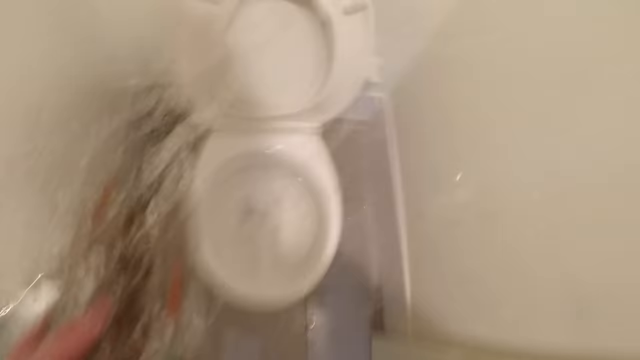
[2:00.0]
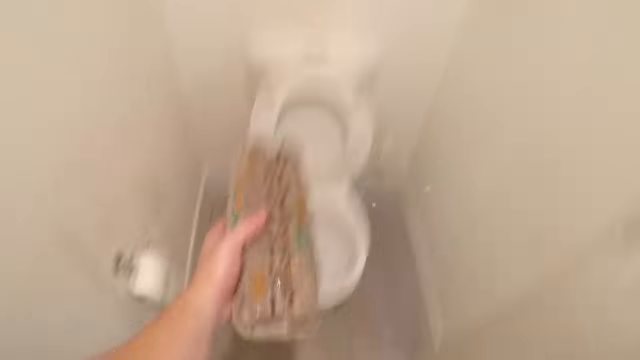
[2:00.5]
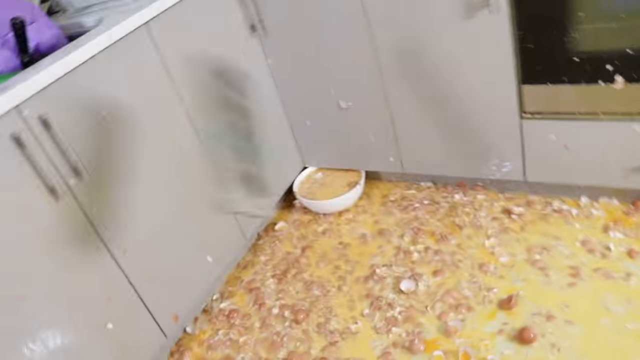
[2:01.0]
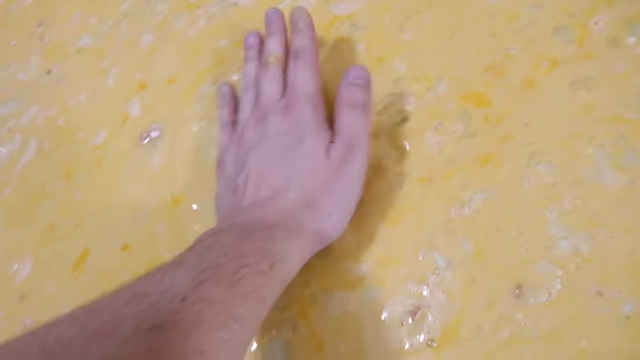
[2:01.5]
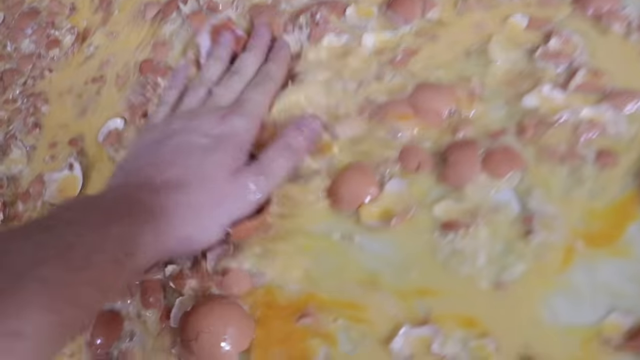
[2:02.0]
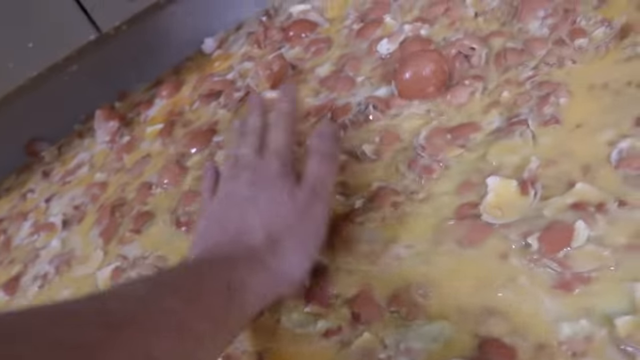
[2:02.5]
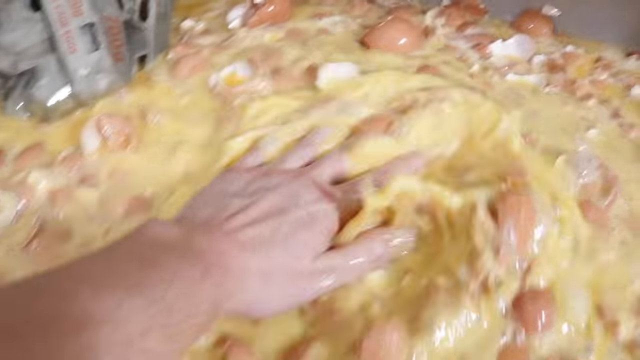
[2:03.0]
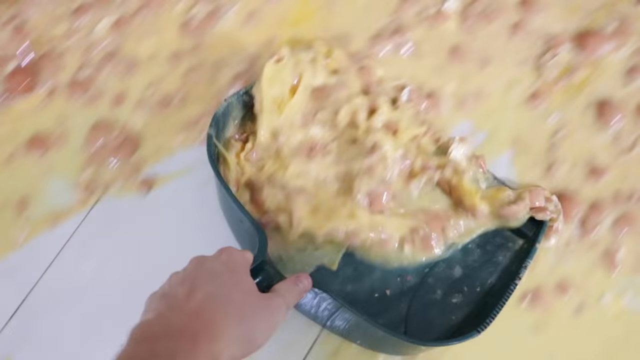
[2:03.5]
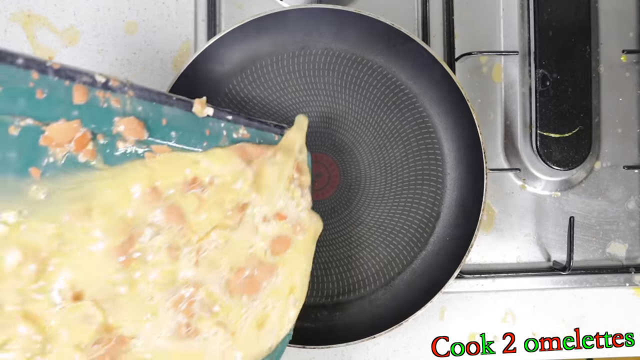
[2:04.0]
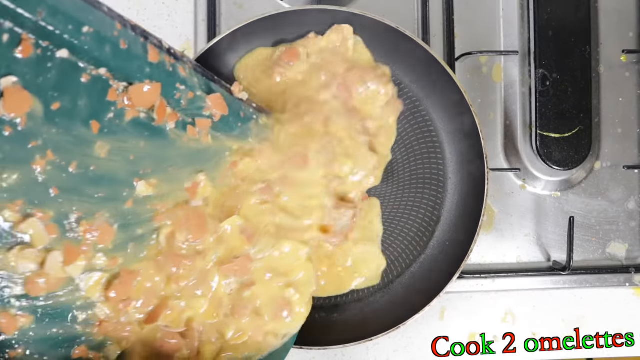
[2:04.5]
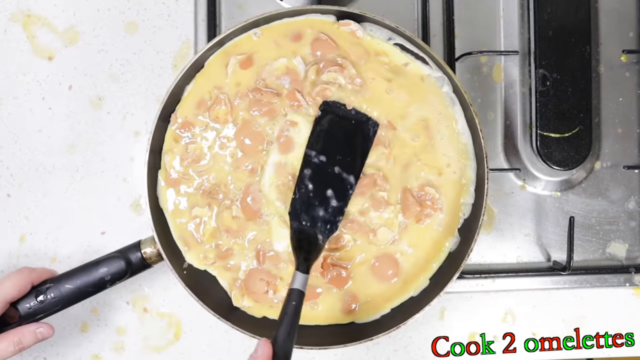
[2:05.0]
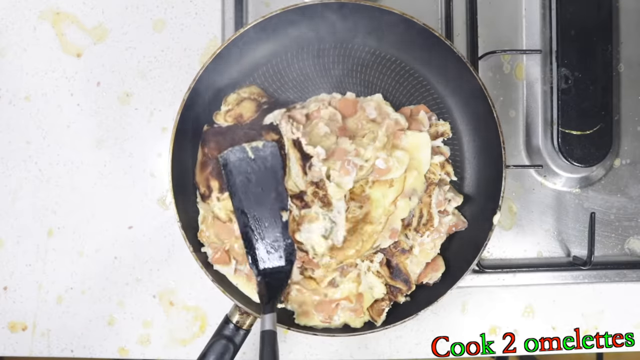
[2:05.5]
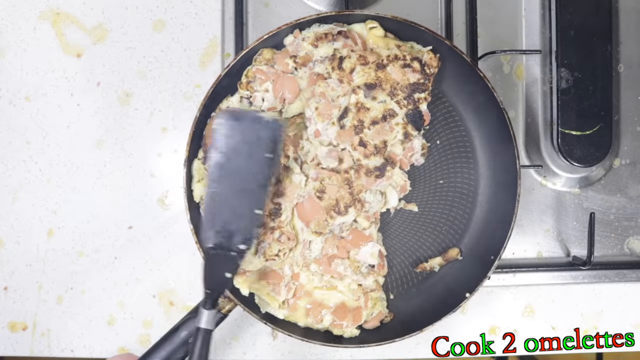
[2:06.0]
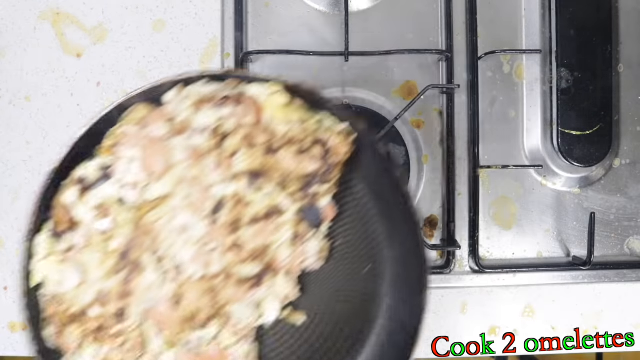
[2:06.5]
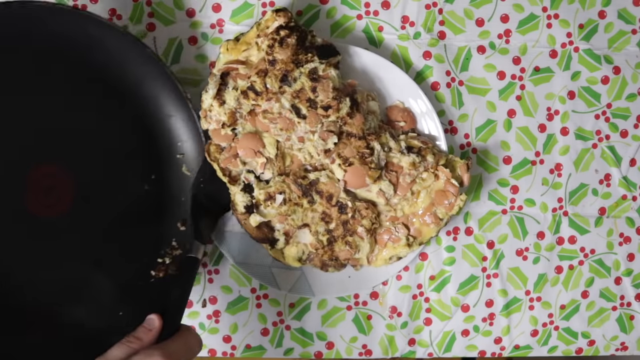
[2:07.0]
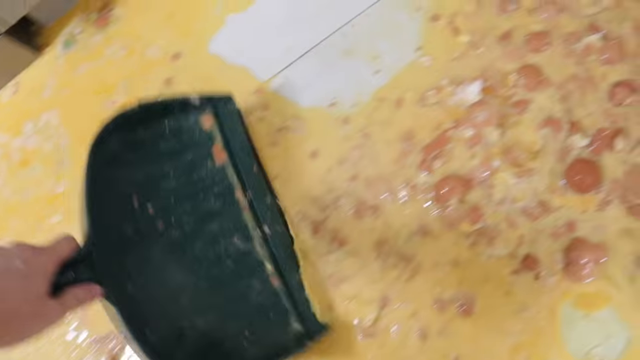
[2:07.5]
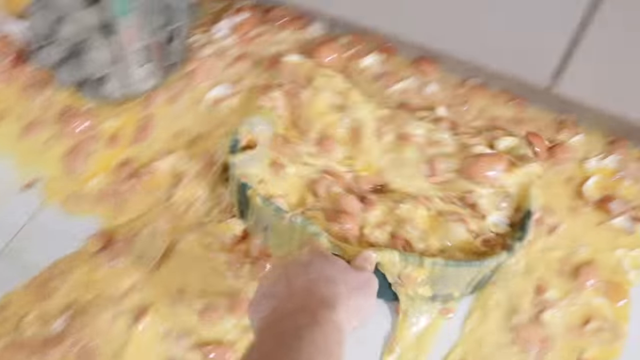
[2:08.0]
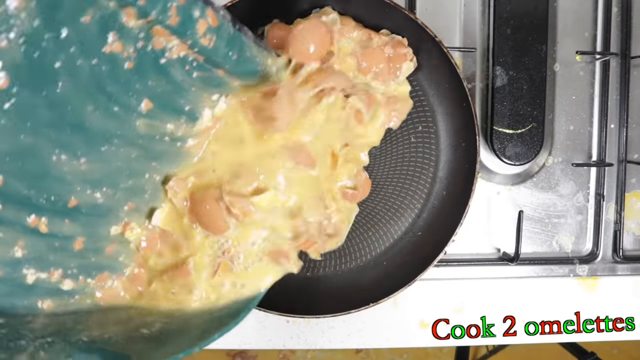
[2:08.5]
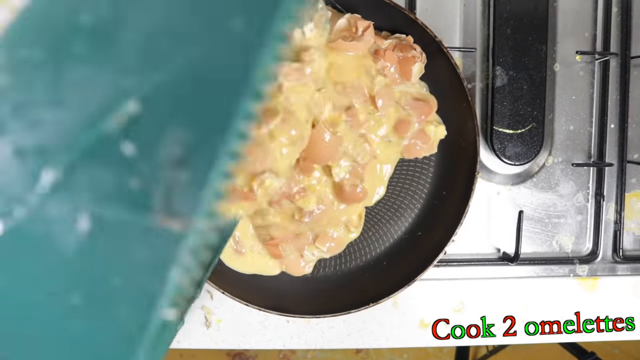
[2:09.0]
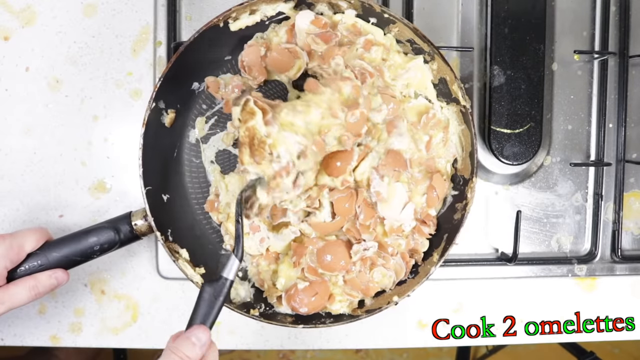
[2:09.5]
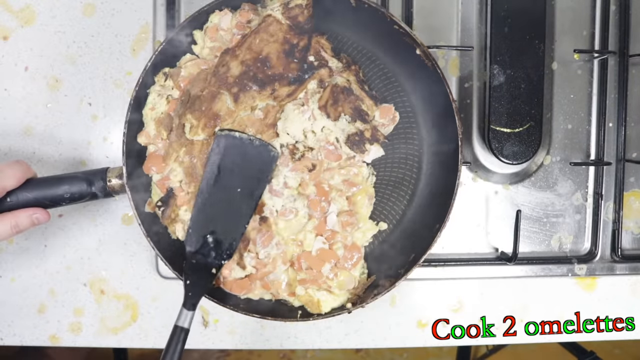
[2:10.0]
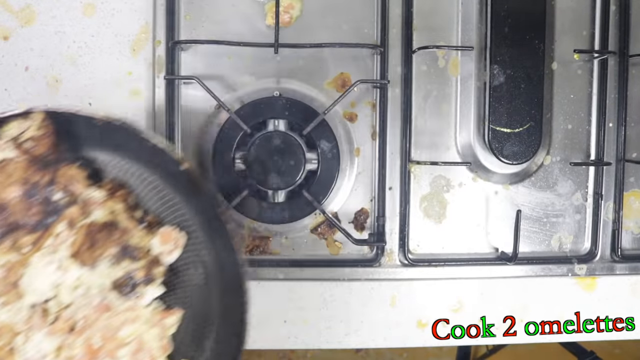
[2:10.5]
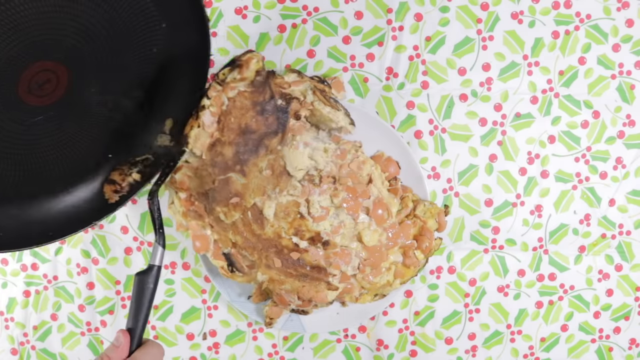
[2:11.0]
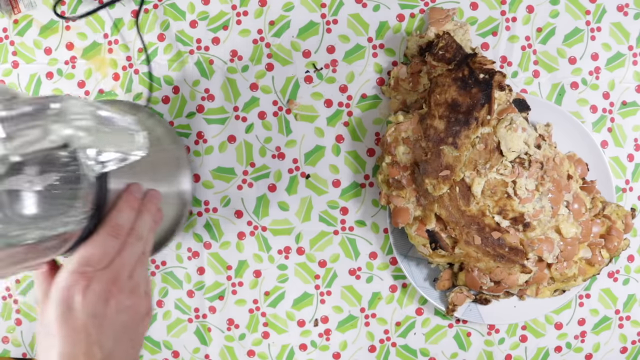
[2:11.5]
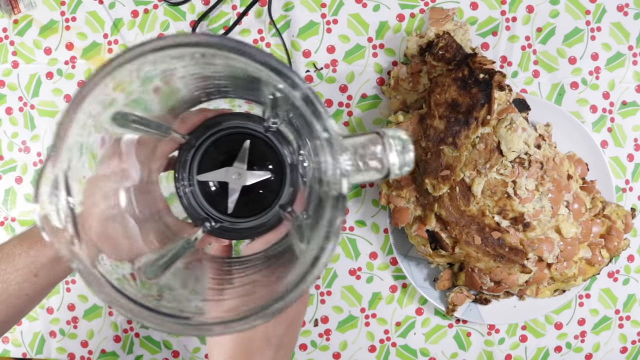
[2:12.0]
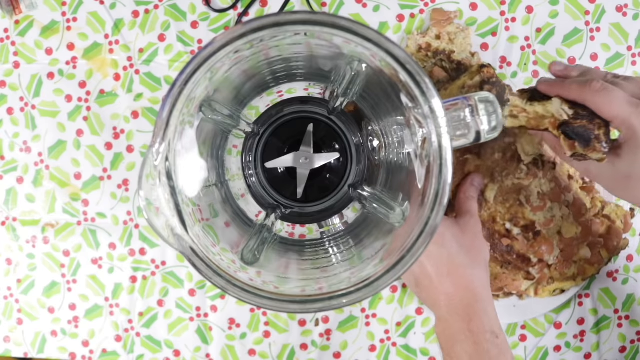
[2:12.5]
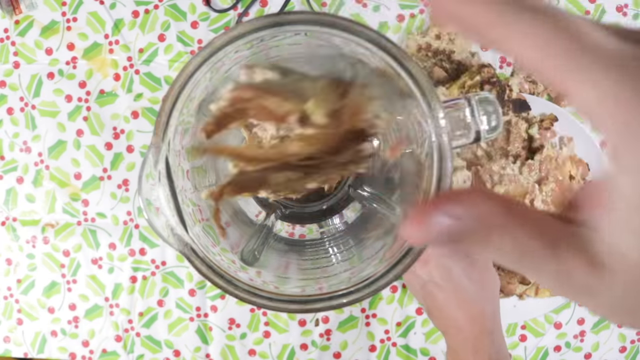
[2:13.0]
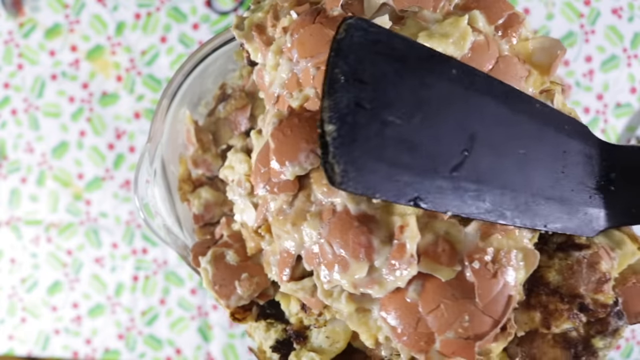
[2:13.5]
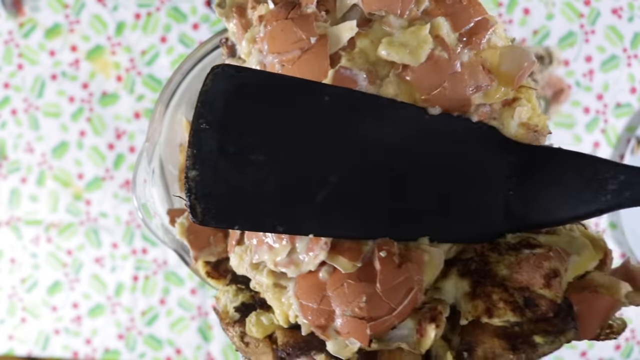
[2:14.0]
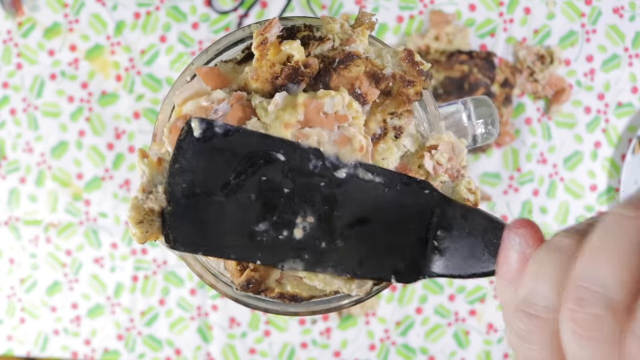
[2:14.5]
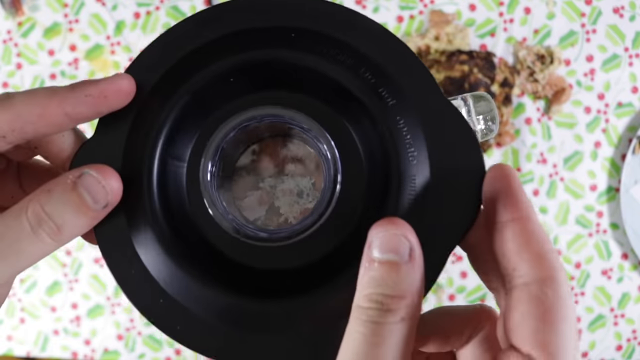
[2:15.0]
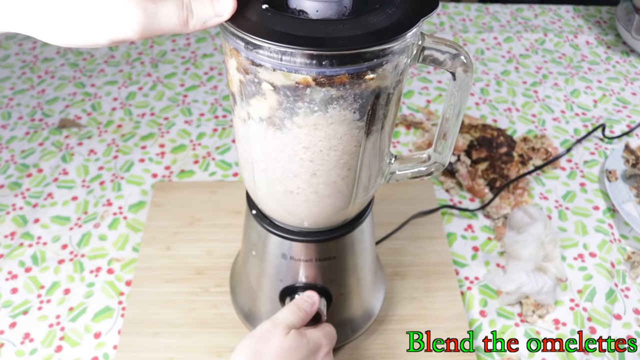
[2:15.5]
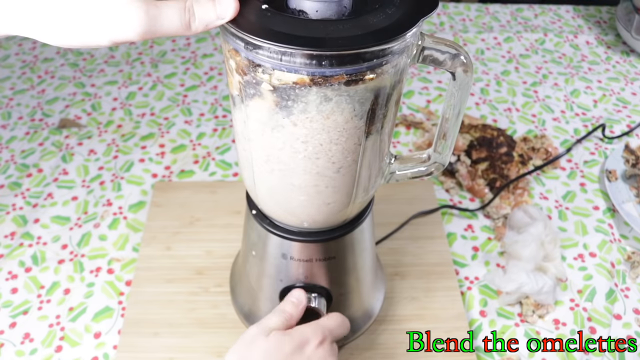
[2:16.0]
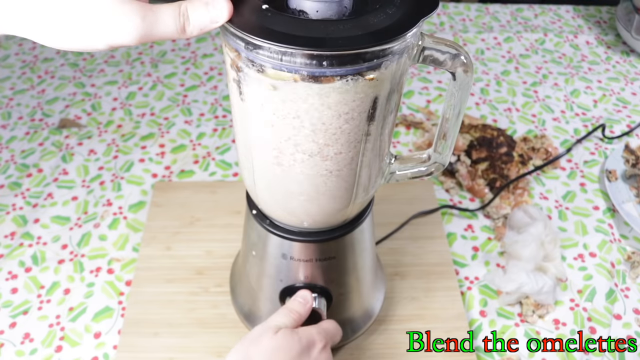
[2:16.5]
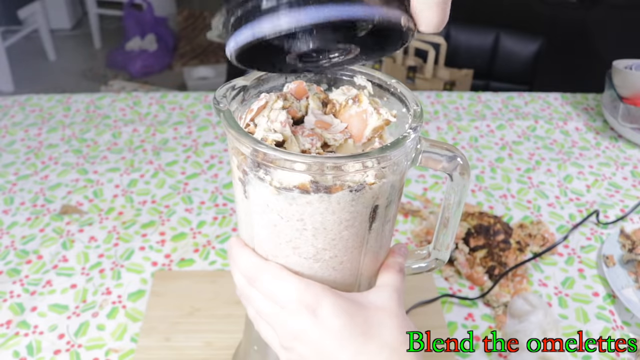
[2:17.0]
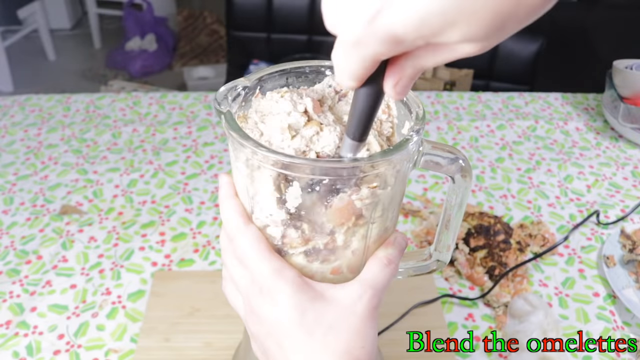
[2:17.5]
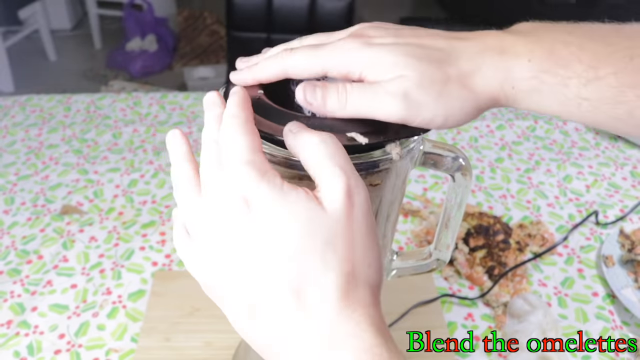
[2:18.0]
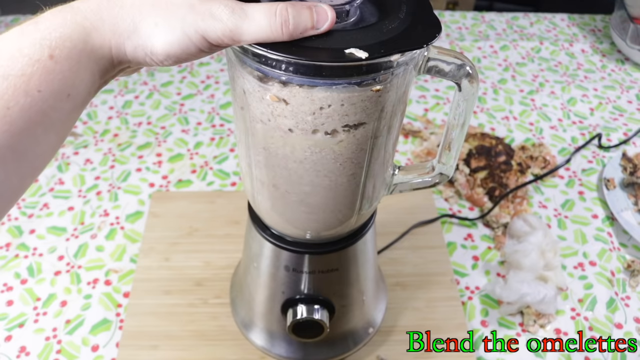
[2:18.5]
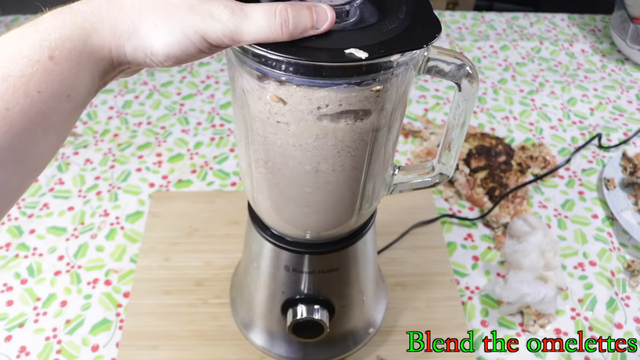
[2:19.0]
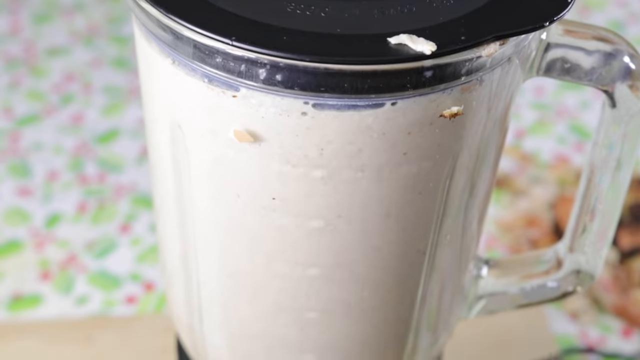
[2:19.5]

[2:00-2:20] The camera has been removed from the toilet, and the hand is still grasping the soaked egg carton. After a lot of chaotic camera shaking, the video cuts back to the kitchen, where the hand throws the egg carton at the bowl. A close-up shows the pool of shattered eggs covering the floor, and the hand pats the pool, appearing to search for something in it. The hand grabs what appears to be a green dustpan and scoops up a lot of the egg waste, pouring it into a frying pan on the stovetop, which is covered in egg mess. One hand holds the pan's handle while the other presses a long black spatula down onto the eggs, appearing to make a large amount of scrambled eggs or an omelette. The large pile is removed from the burner, and the spatula places it onto a plate; the omelette has multiple egg shells in it and is partially burned in many spots. The person scoops more eggs from the floor in the same way, pours them into the pan, makes another seared omelette, and places it onto the same plate. What appears to be a blender or food processor is placed next to the plate, and the hands put the omelettes into it, the last bit forced down by the spatula. The person turns on the blender, producing a white paste with bits of omelette still solid at the top, takes off the top, presses the solid parts back down into the bottom, replaces the cap, and turns it on again.